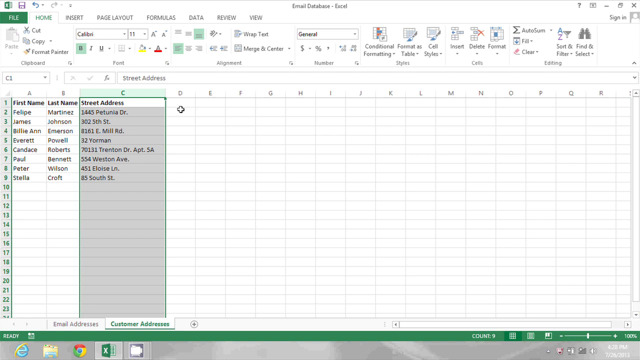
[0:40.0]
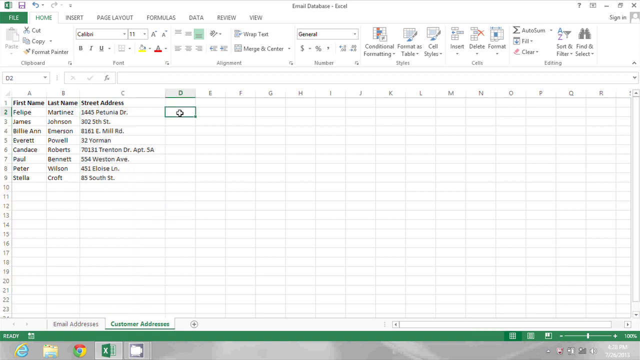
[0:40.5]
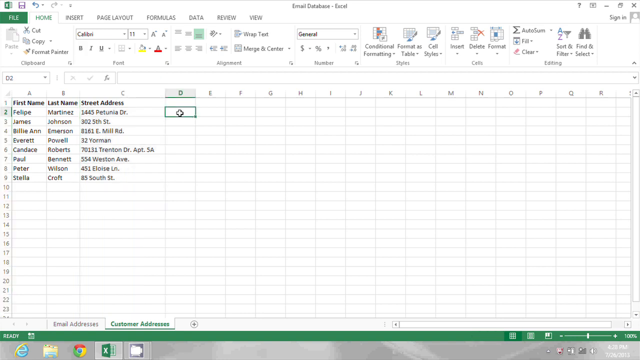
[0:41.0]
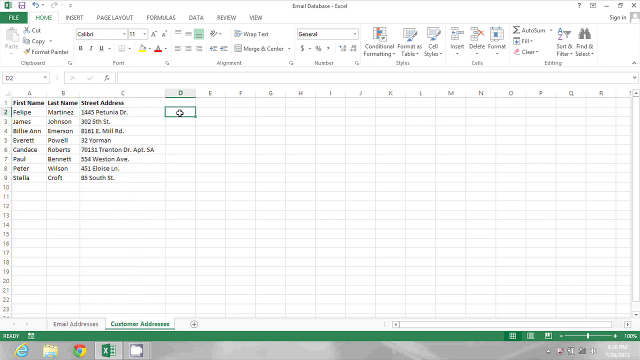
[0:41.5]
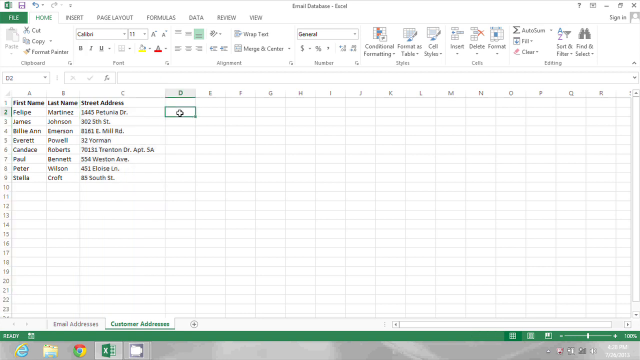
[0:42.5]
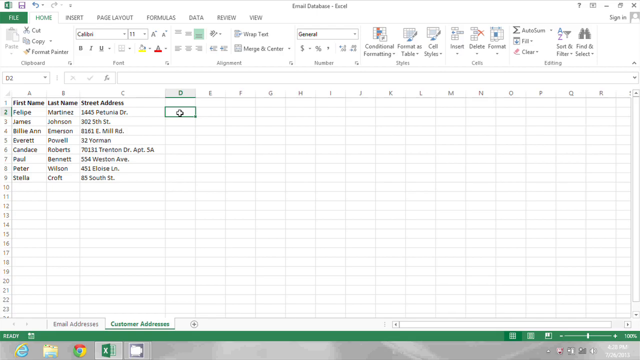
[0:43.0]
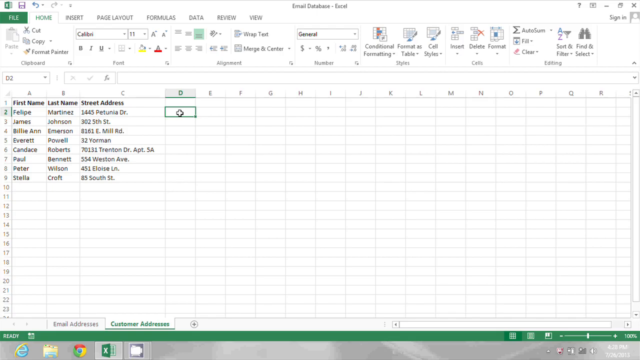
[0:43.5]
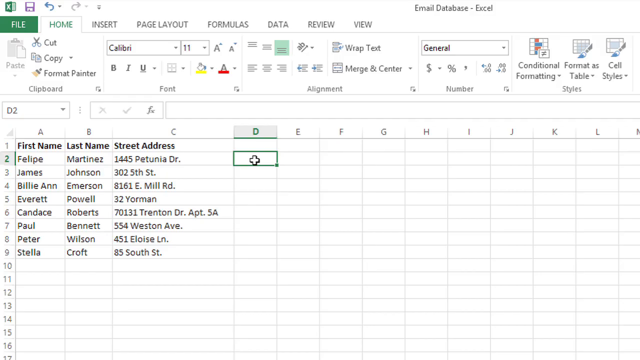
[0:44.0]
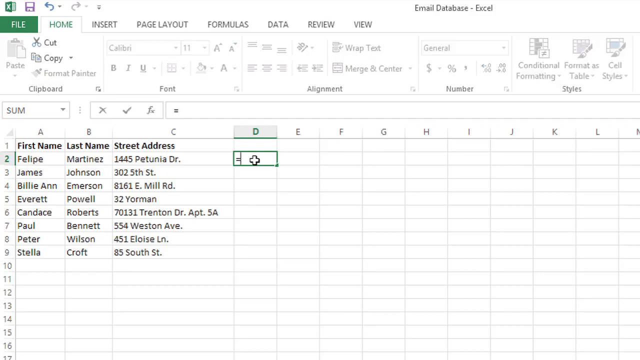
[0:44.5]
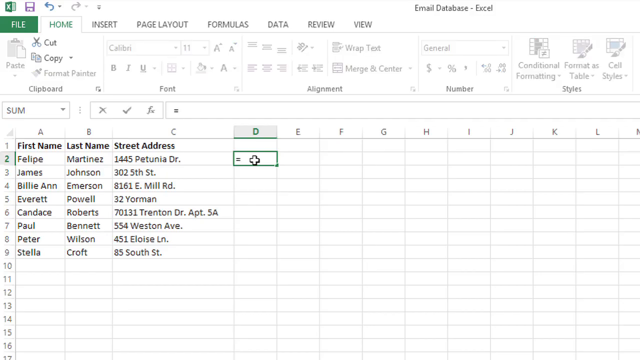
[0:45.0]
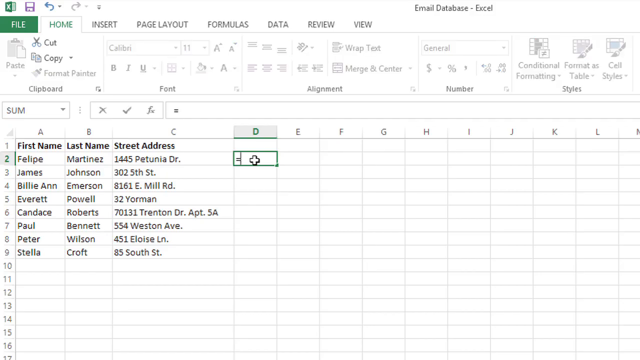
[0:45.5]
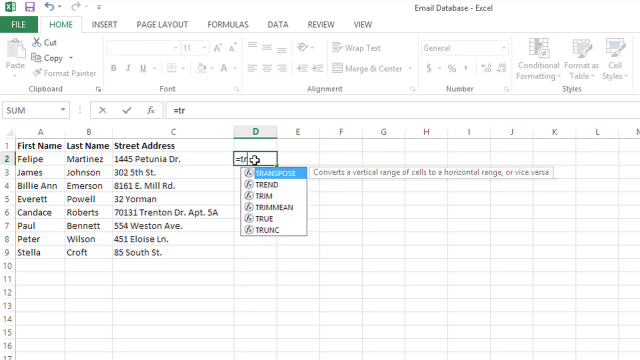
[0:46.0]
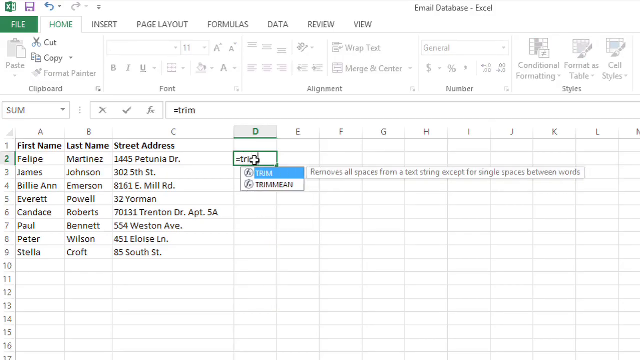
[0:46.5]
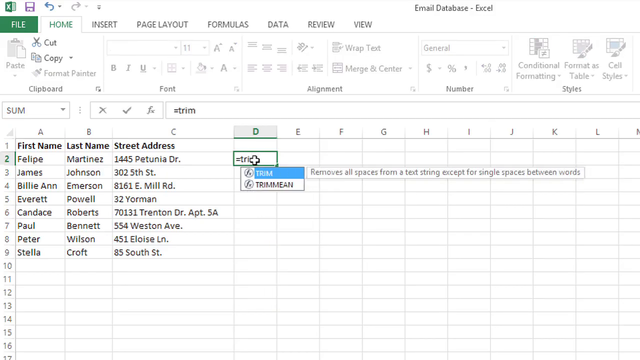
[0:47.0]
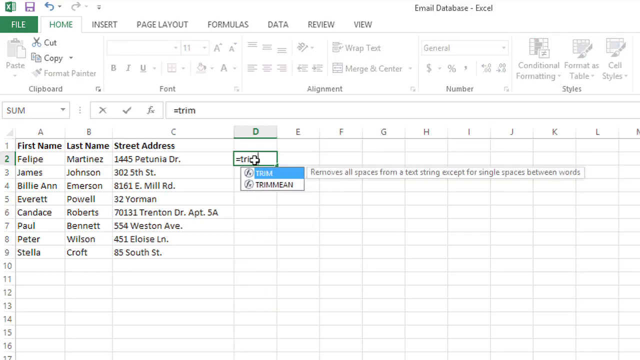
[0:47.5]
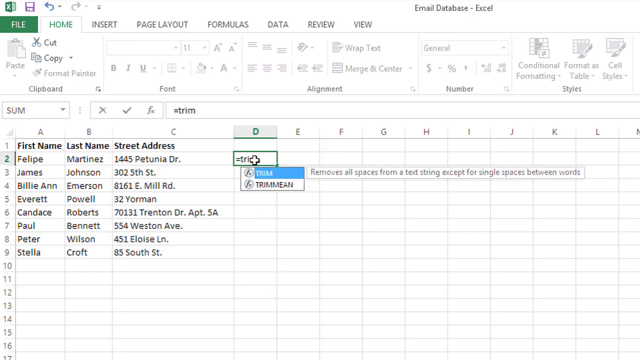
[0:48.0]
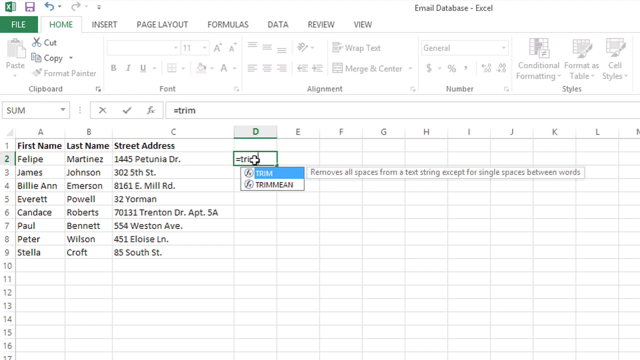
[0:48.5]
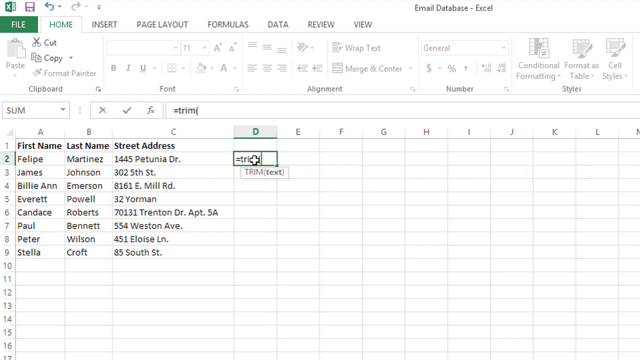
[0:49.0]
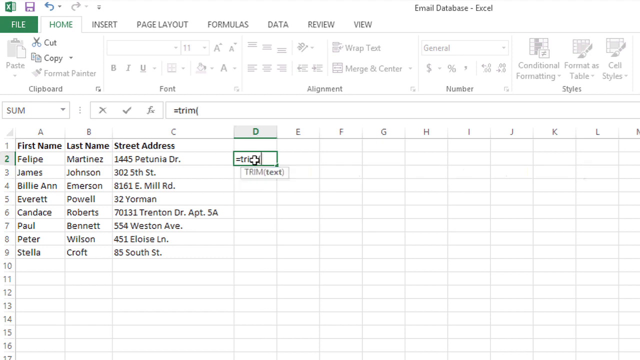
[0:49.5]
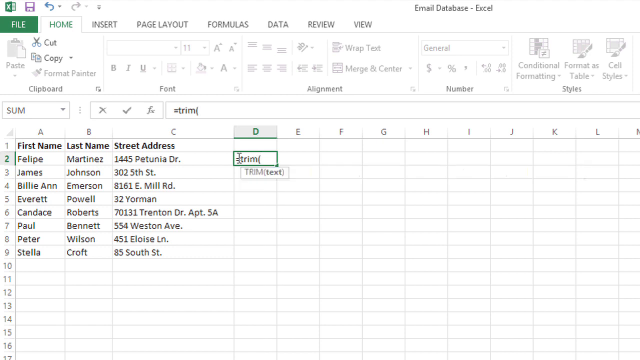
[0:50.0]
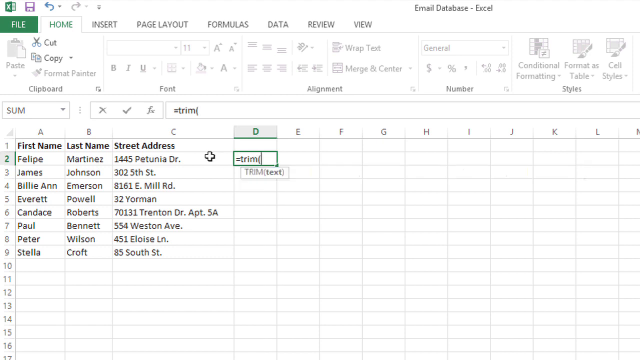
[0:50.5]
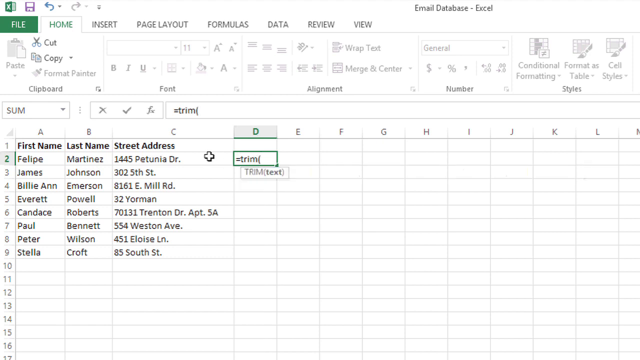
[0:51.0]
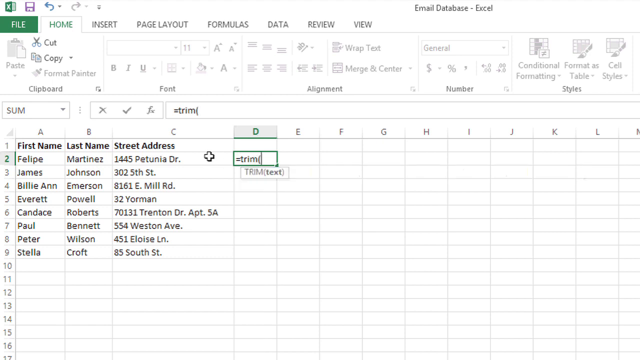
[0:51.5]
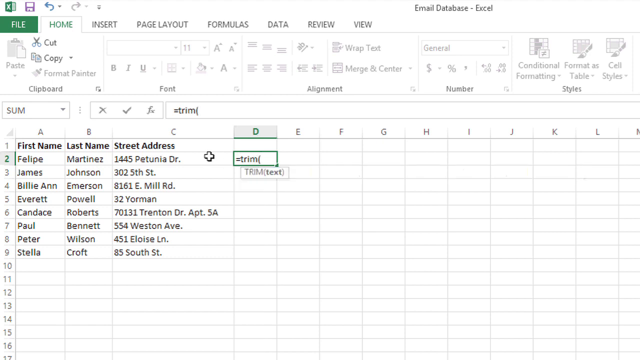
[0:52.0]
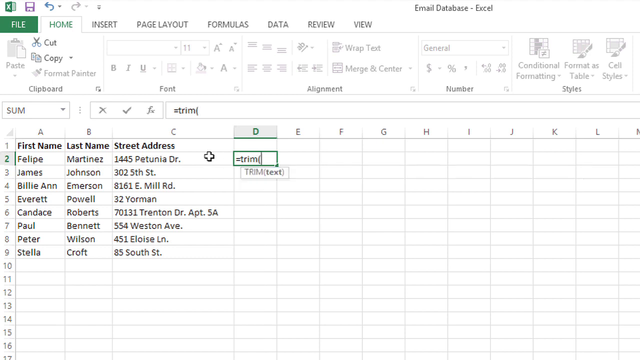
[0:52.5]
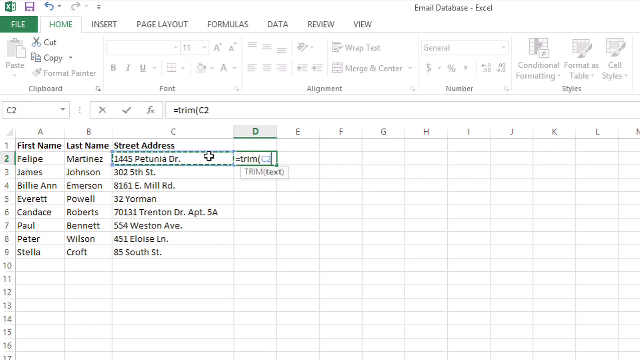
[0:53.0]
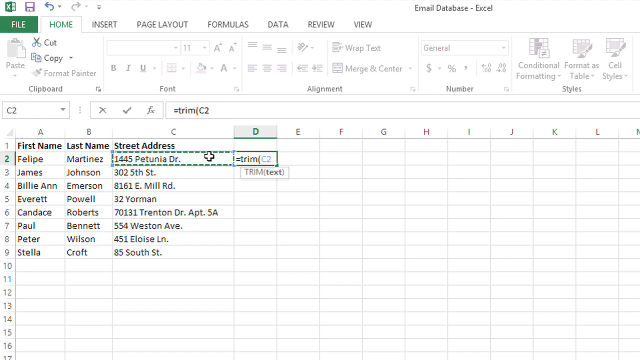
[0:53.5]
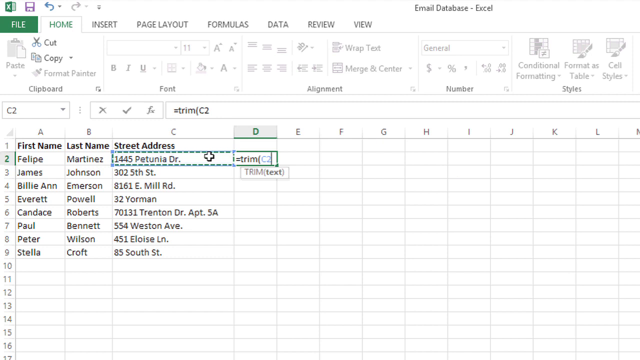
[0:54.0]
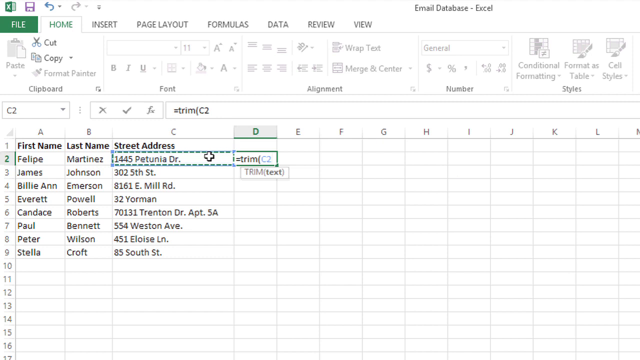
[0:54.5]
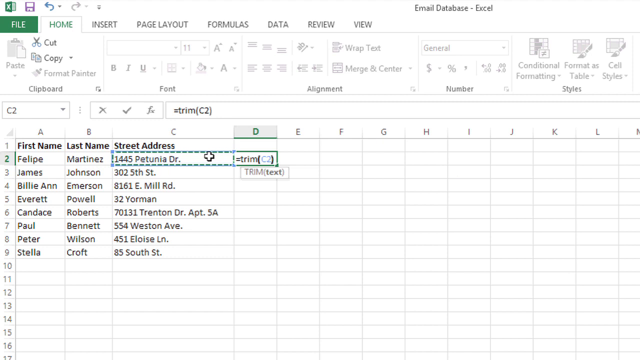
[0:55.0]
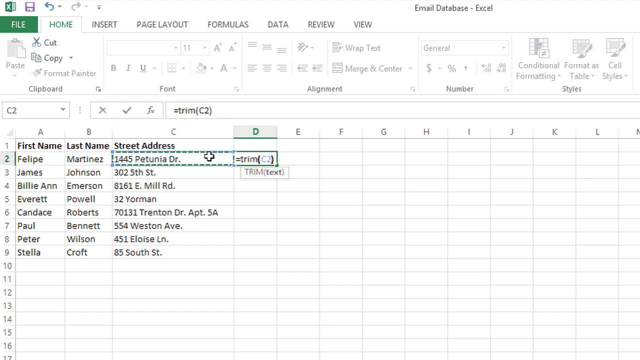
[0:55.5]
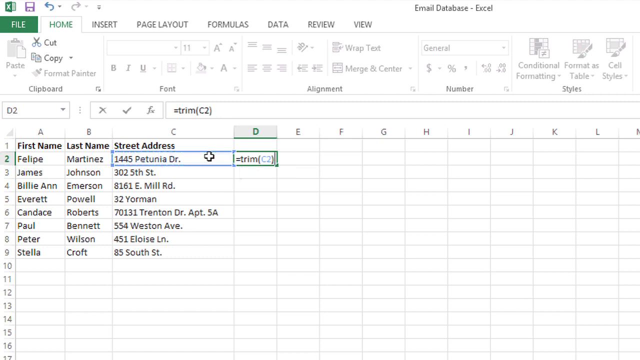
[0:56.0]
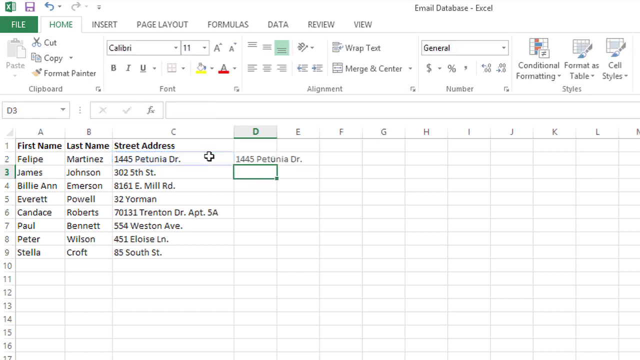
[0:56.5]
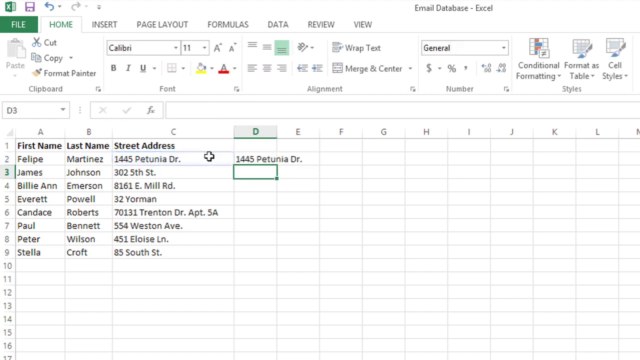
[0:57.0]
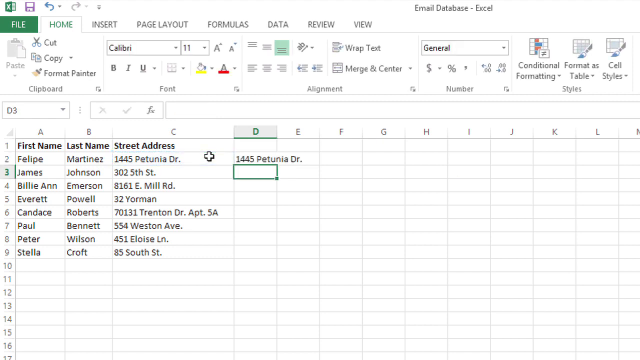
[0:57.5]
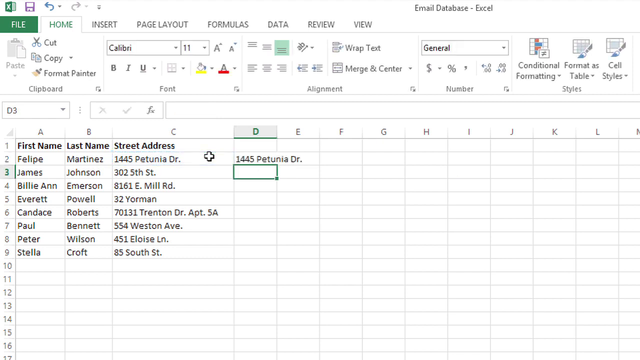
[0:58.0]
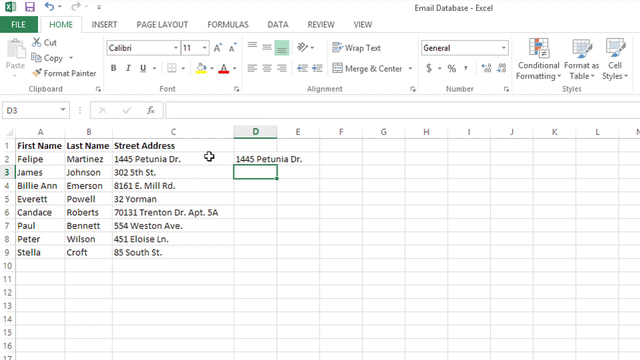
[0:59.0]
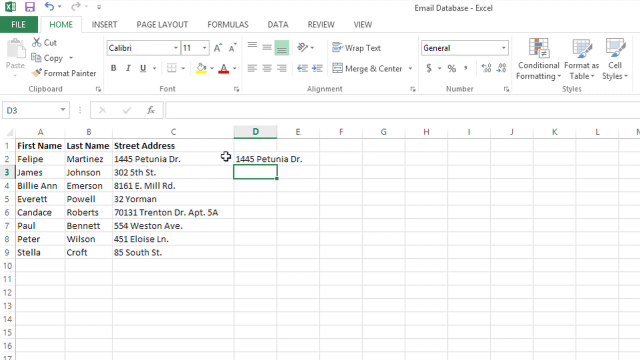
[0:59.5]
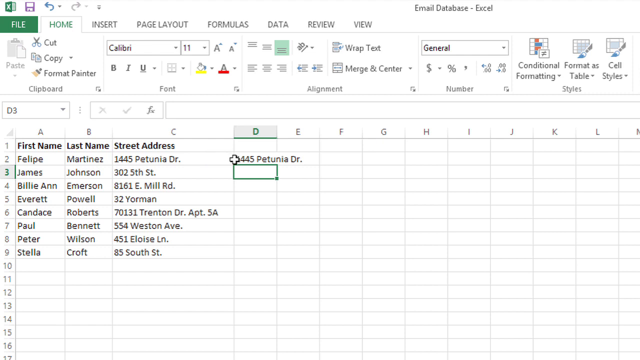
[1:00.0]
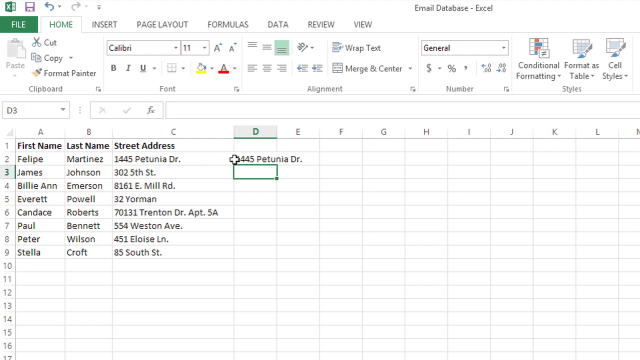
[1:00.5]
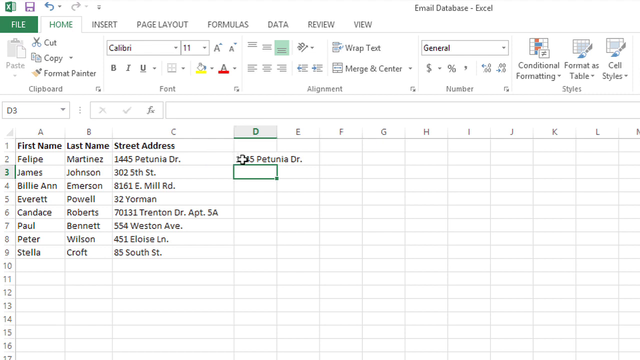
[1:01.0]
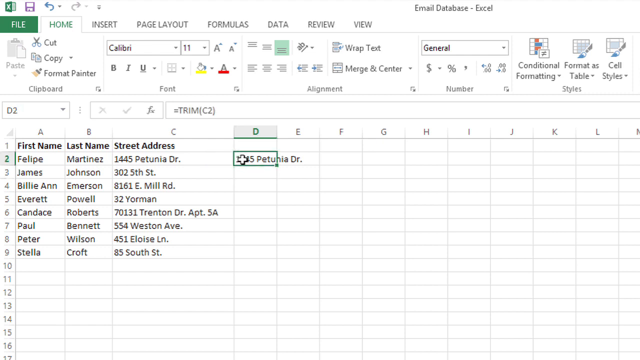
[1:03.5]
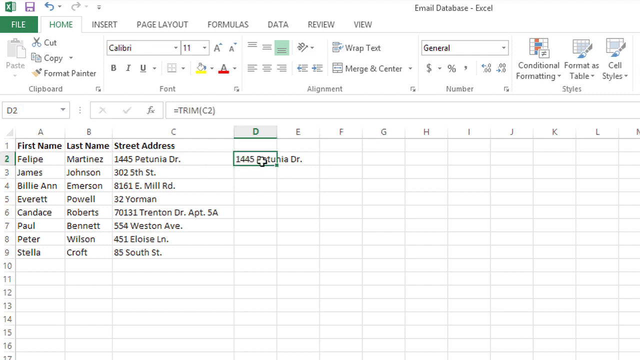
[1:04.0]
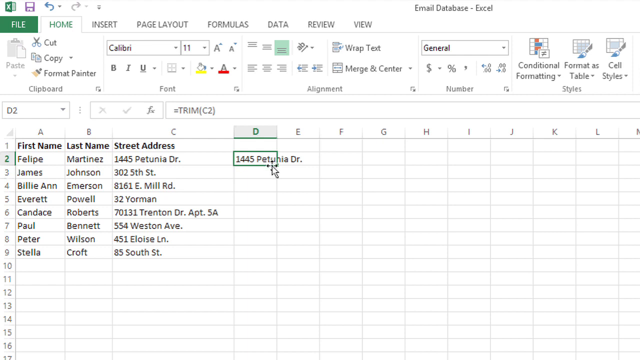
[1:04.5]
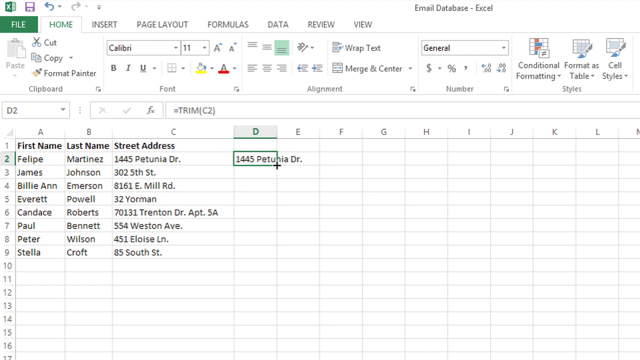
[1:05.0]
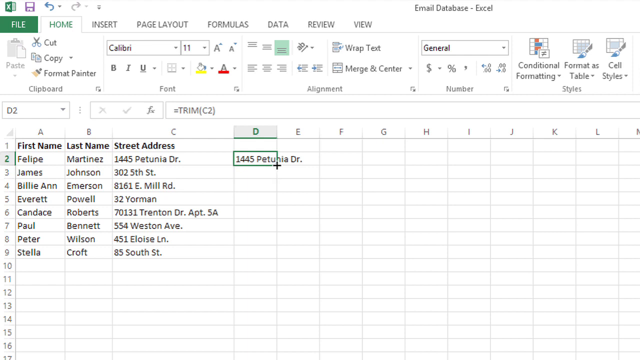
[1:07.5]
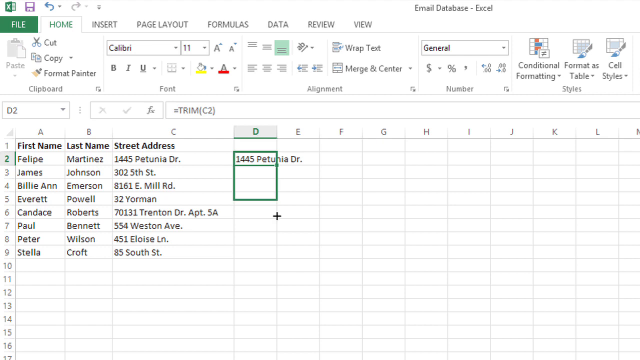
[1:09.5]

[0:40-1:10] The lesson appears to move on to formulas in Excel. The instructor, Bree Clark for eHow Tech, clicks on column D and types an equals sign, T-R-I-M, and a parenthesis, then clicks over onto the C2 block, the first of the street addresses listed in column C, and it fills in for her. After she closes the parenthesis and hits Enter, the cell shows the same address that is in column C. She then highlights the rest of column D, apparently to copy the function down. The view is a screen share of her laptop.